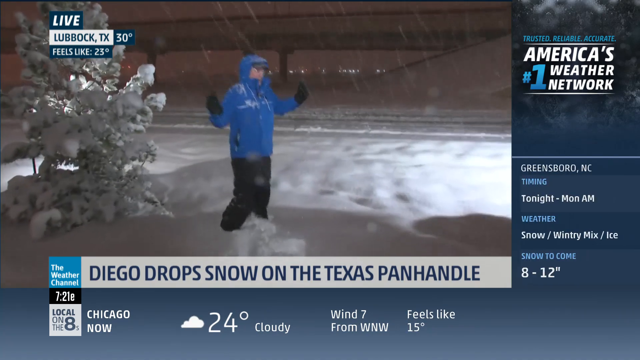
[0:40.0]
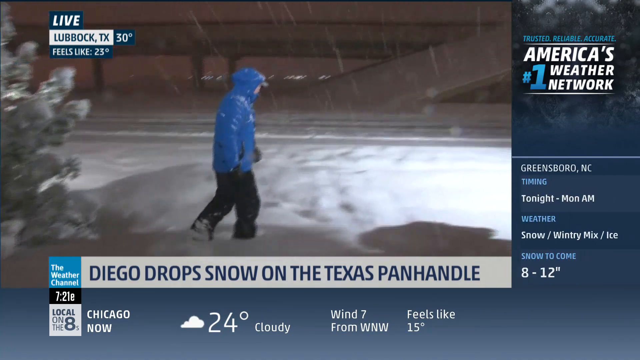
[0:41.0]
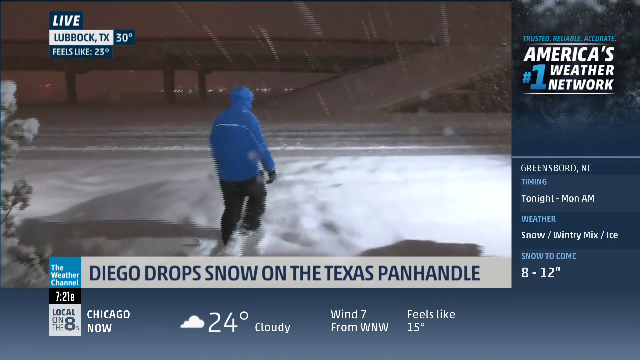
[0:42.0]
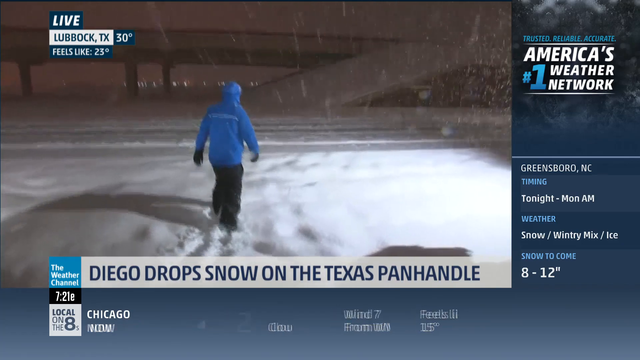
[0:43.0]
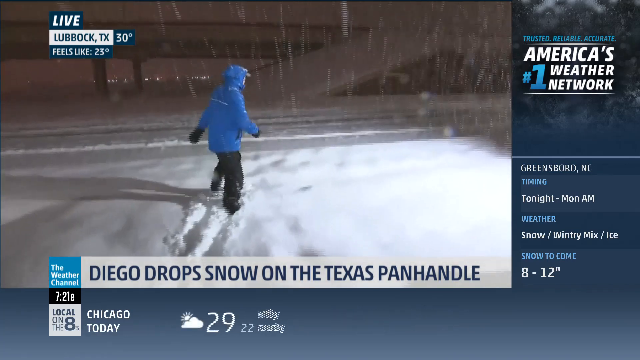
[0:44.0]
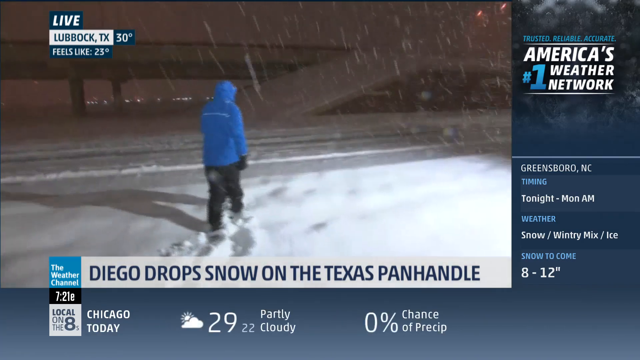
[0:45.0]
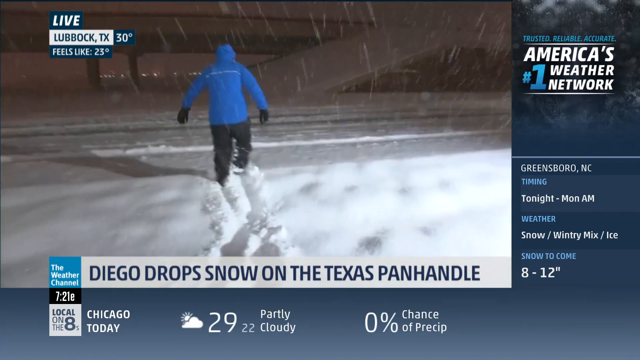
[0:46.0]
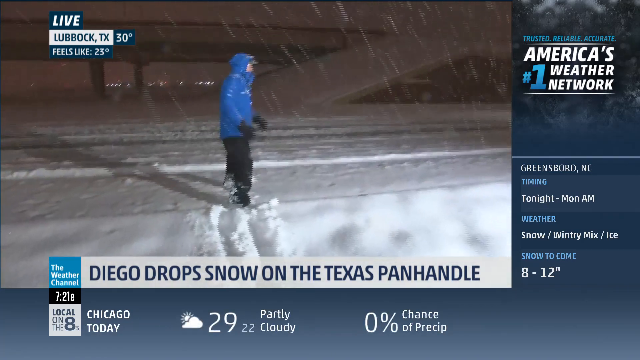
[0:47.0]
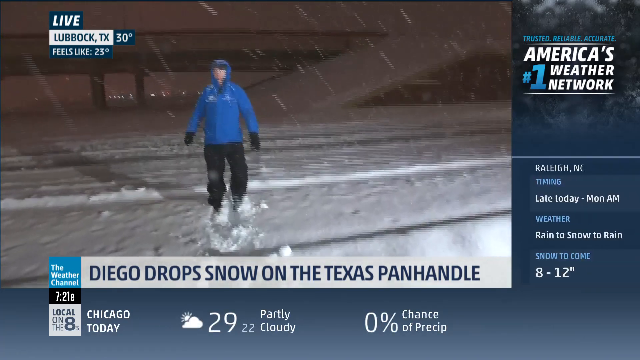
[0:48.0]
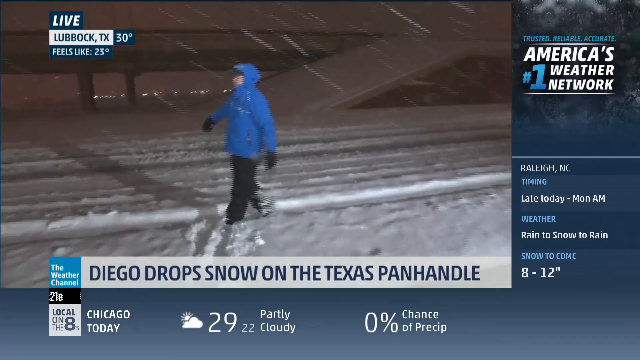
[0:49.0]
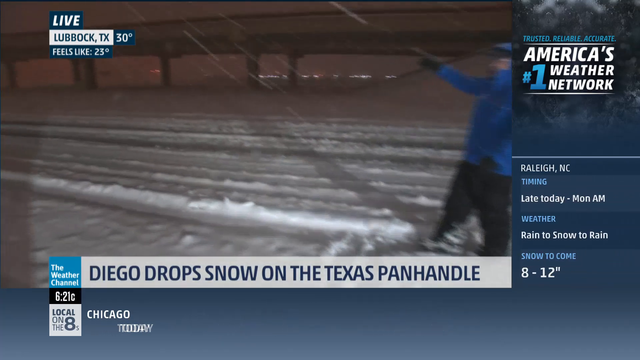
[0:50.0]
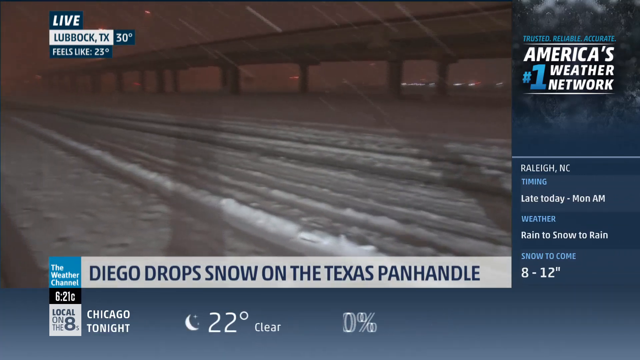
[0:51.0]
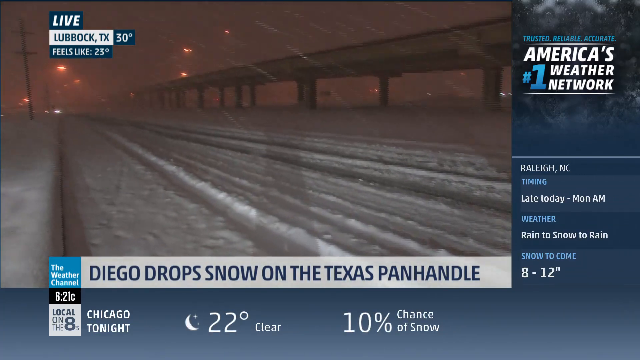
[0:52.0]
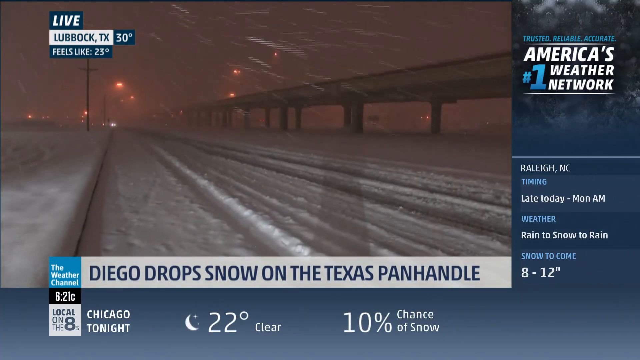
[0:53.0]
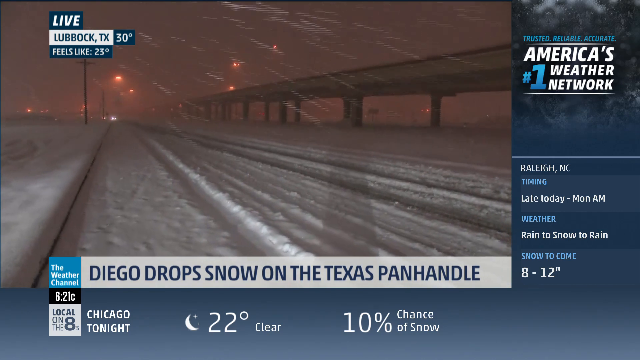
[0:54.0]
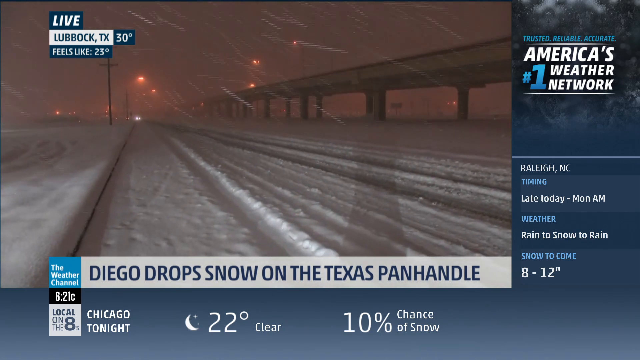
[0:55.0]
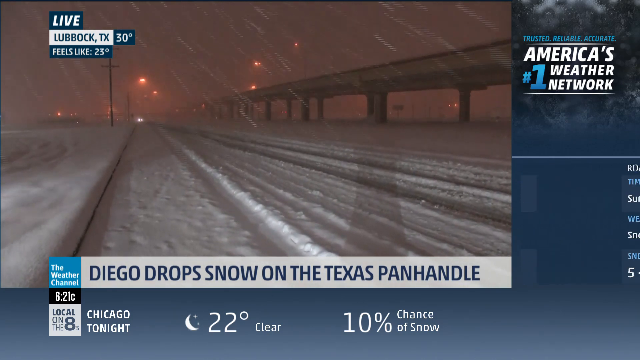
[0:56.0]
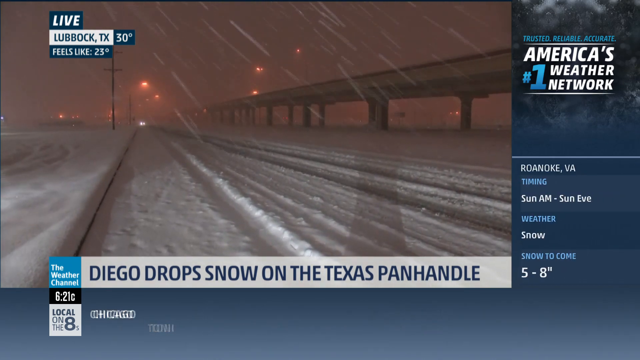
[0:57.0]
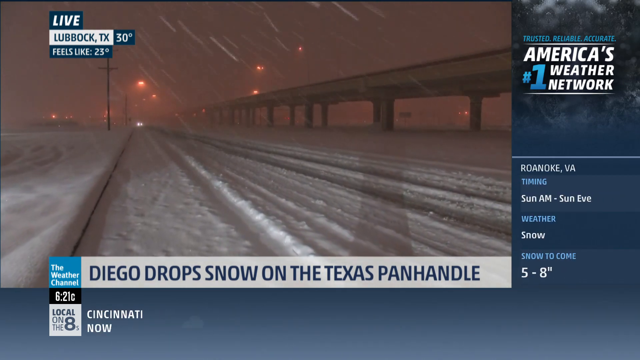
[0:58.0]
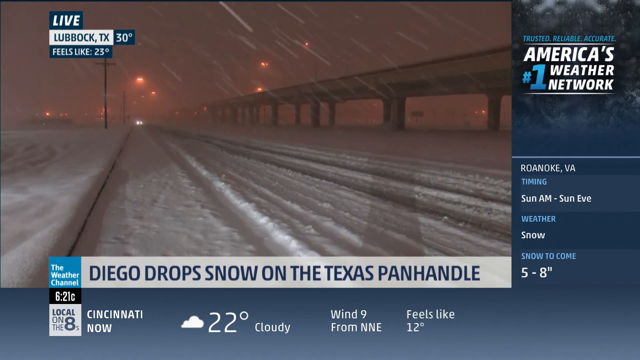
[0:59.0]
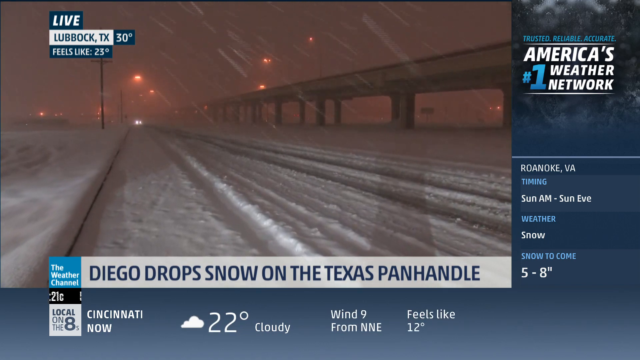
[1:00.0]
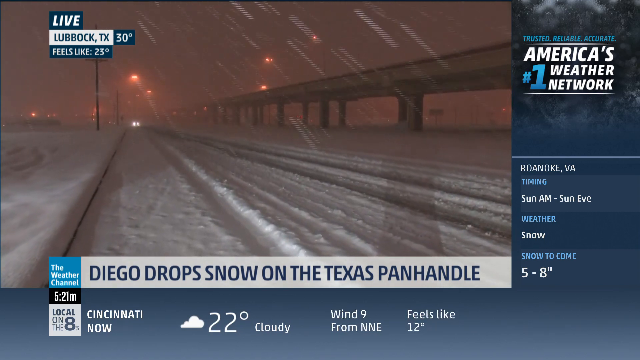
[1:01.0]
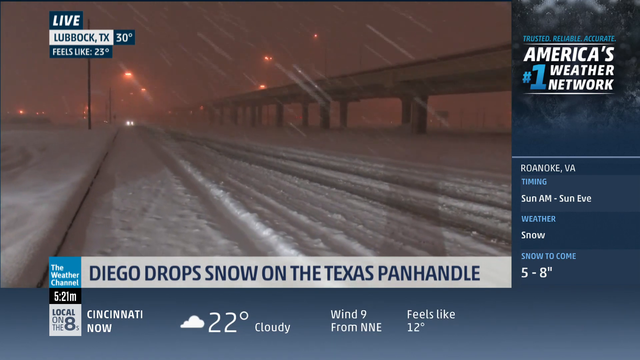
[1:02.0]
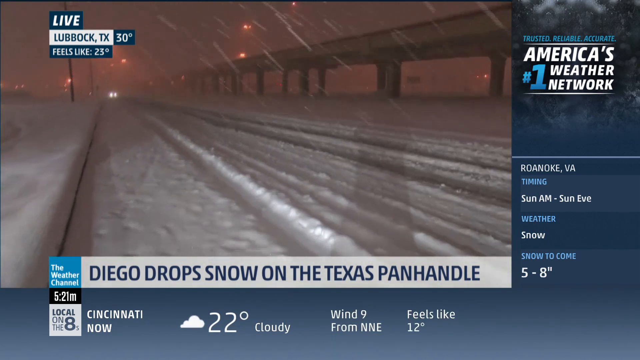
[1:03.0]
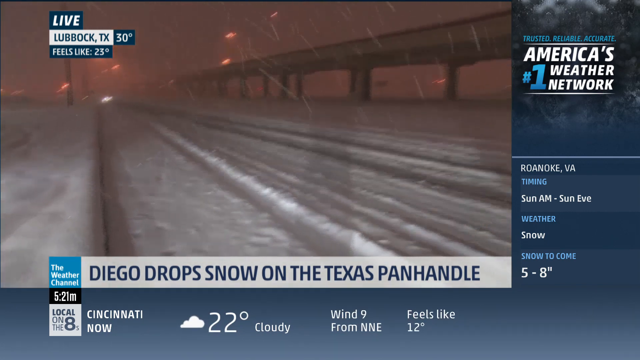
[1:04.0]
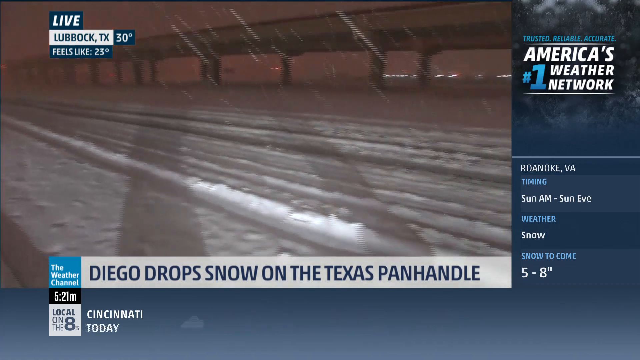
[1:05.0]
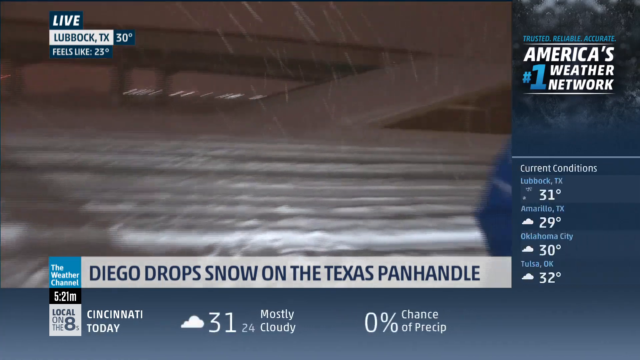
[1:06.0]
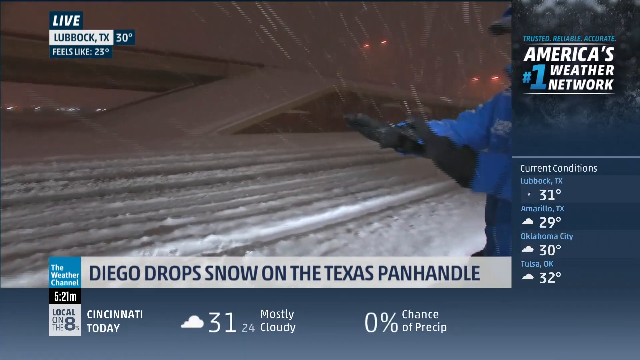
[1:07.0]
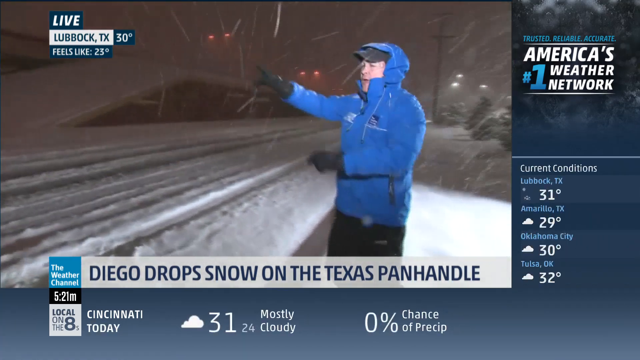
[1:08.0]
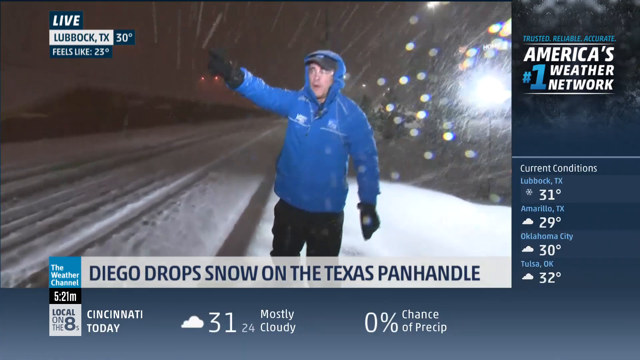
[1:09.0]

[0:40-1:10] The live broadcast from Lubbock, TX shows 30 degrees, feeling like 23 degrees, on the Weather Channel, America's number one weather network, described as trusted, reliable and accurate. The story is about Diego dropping snow on the Texas panhandle. The area, including the trees, is covered in snow. The newsreader walks around with the cameraman, showing what is happening, and goes along a road covered in snow everywhere. He struggles to walk through the snow. The channel also shows the forecast for Greensboro, NC for tonight to Monday morning.